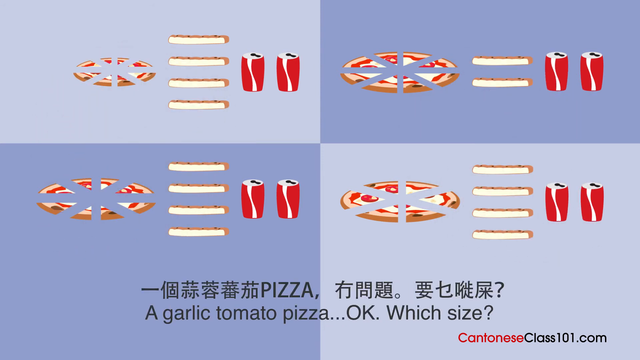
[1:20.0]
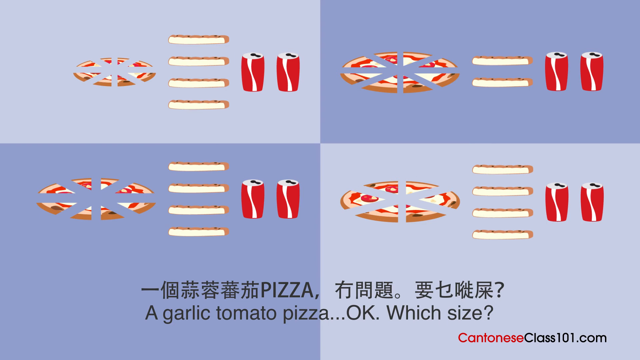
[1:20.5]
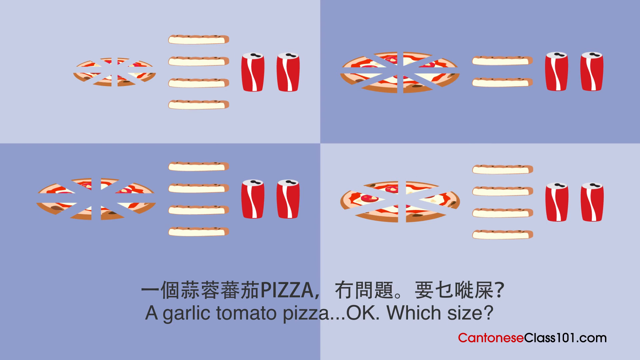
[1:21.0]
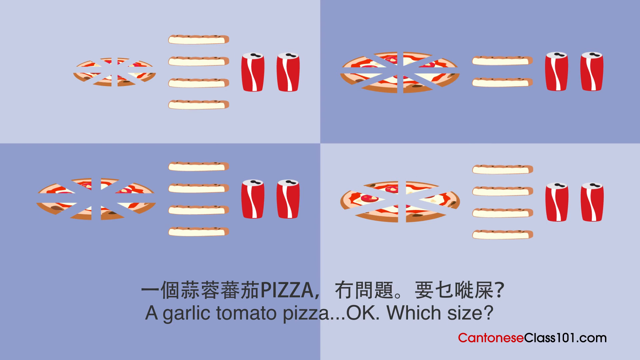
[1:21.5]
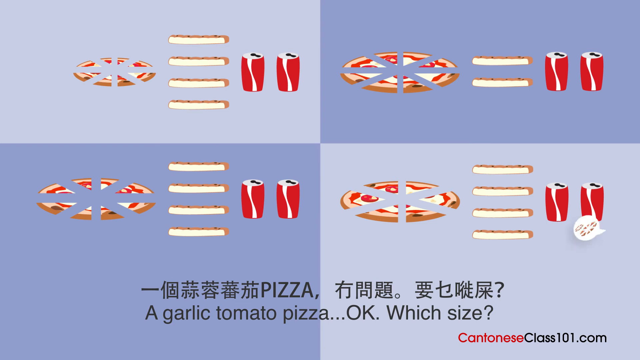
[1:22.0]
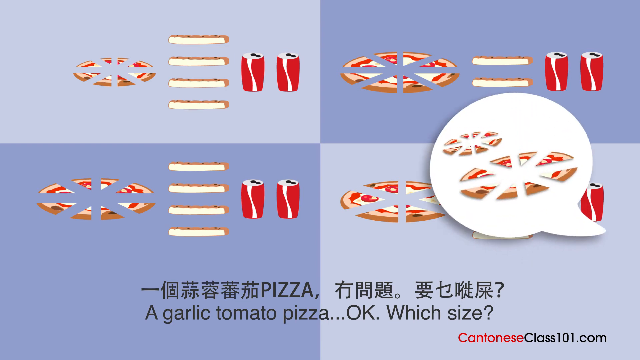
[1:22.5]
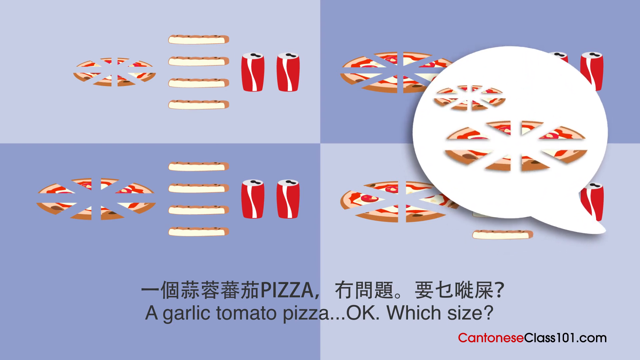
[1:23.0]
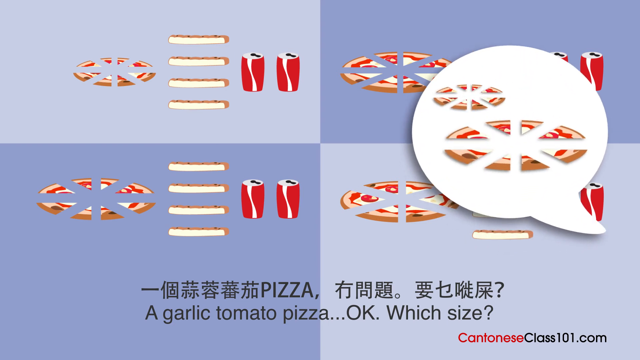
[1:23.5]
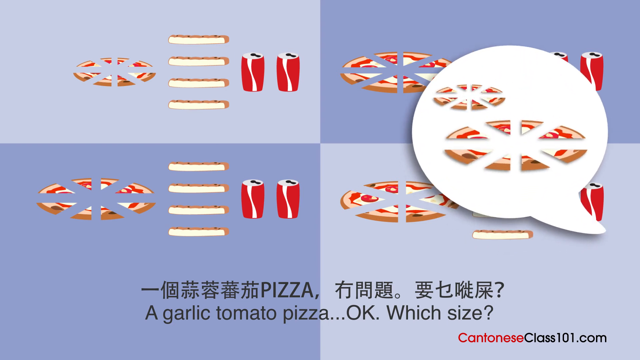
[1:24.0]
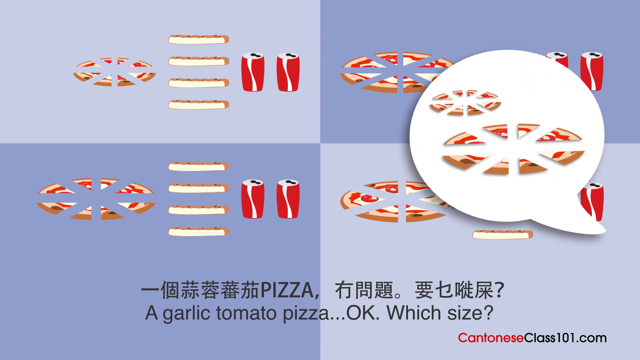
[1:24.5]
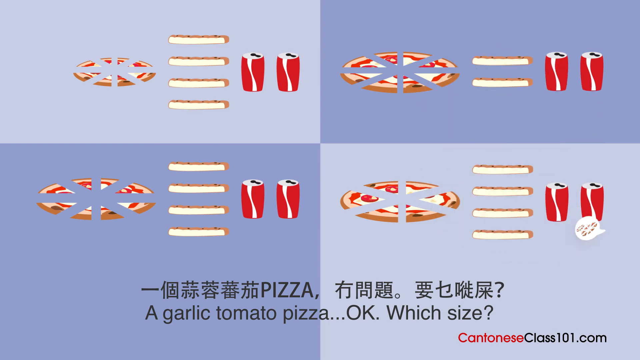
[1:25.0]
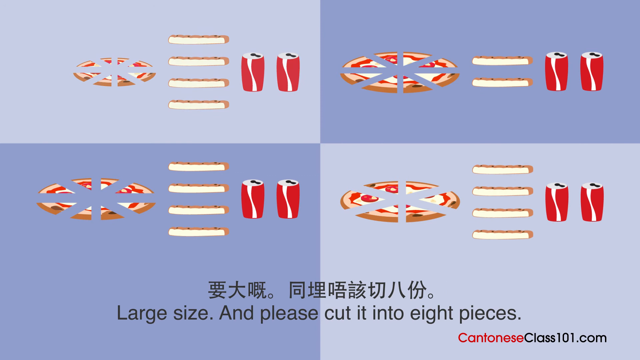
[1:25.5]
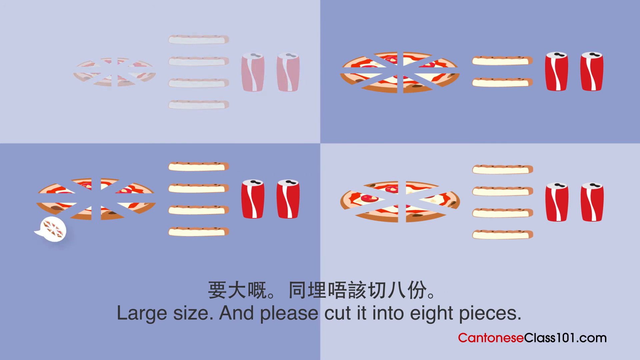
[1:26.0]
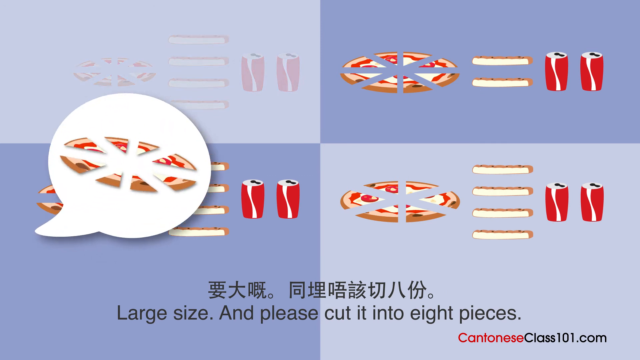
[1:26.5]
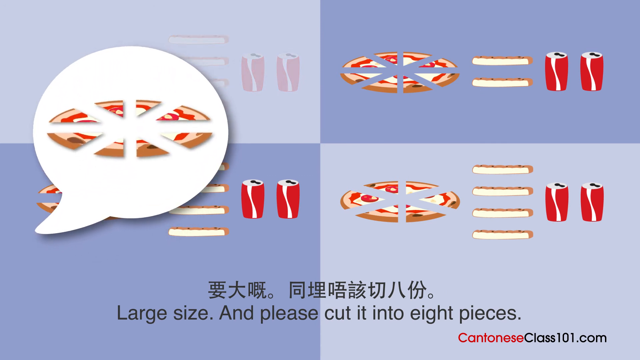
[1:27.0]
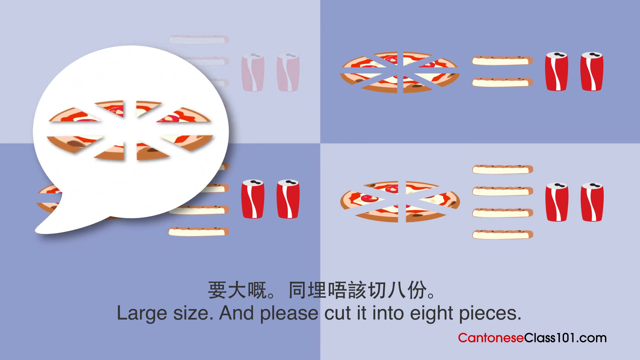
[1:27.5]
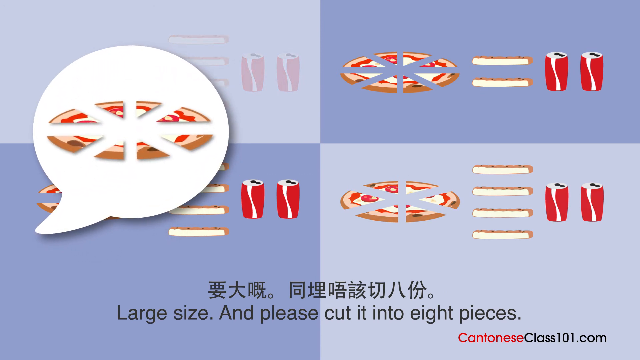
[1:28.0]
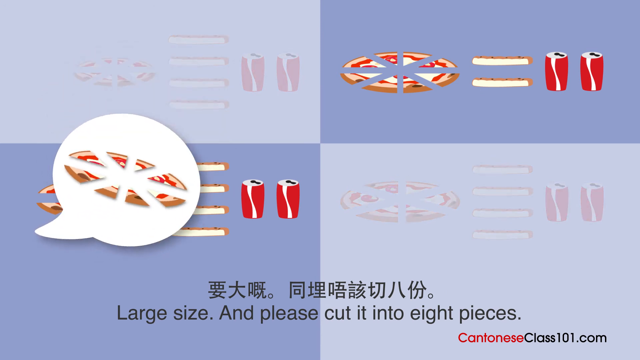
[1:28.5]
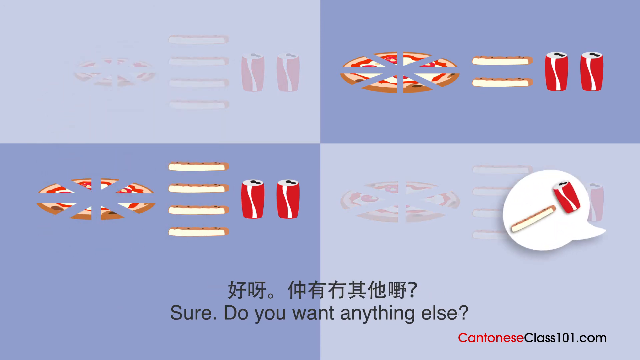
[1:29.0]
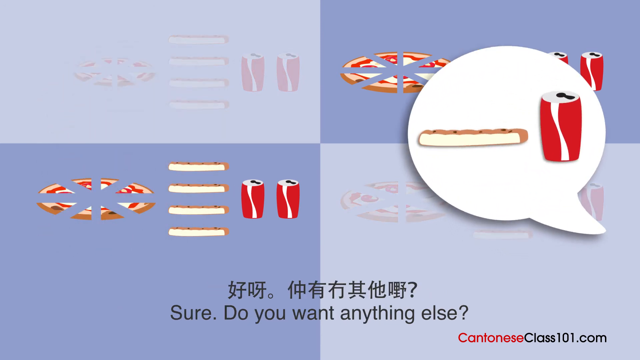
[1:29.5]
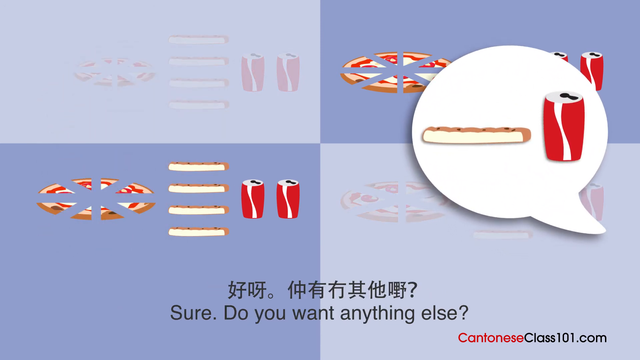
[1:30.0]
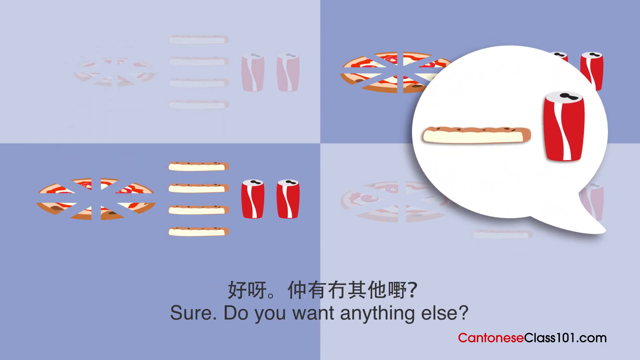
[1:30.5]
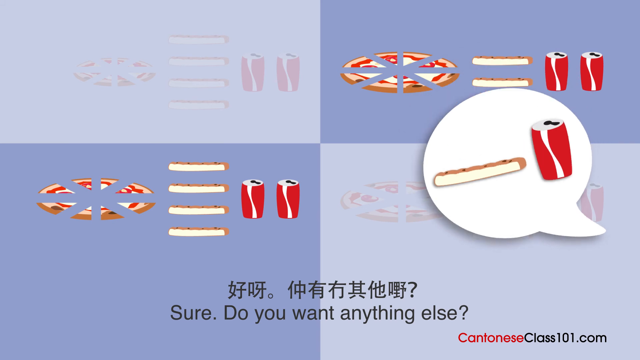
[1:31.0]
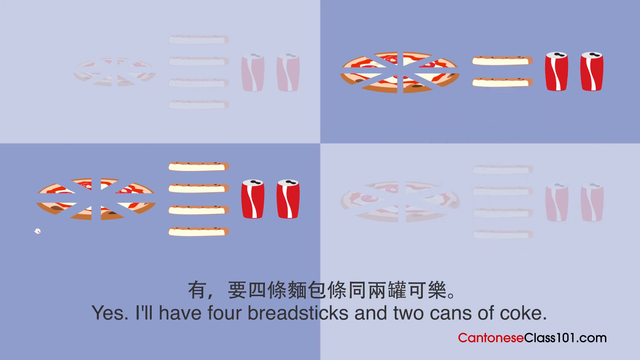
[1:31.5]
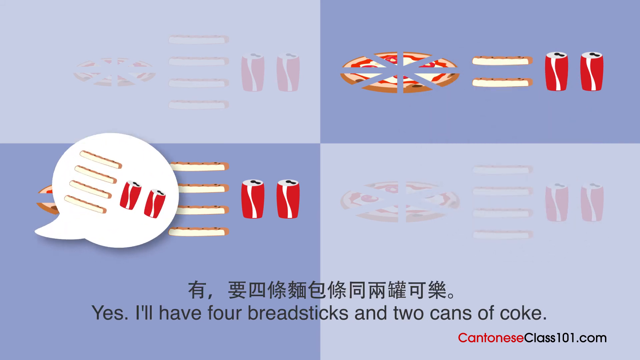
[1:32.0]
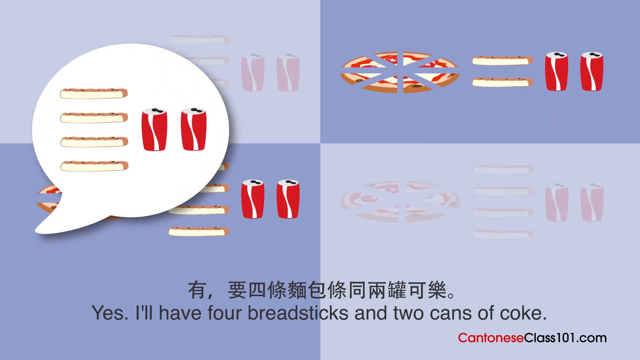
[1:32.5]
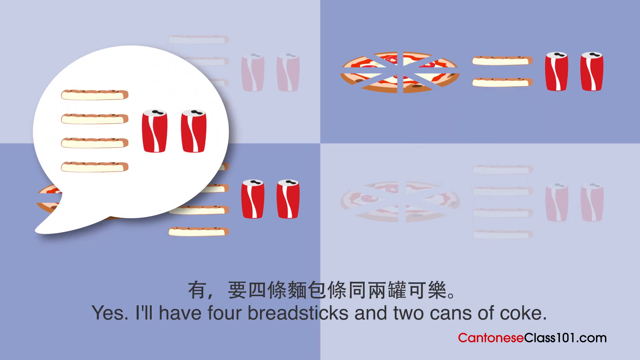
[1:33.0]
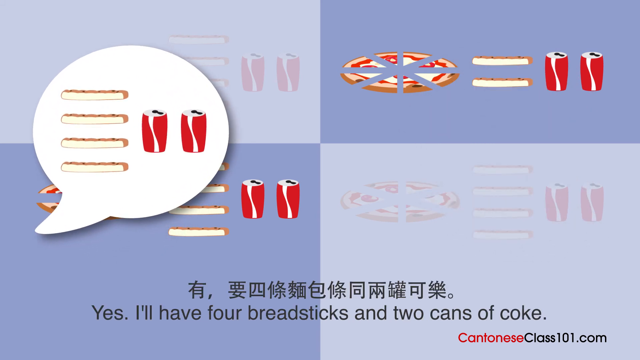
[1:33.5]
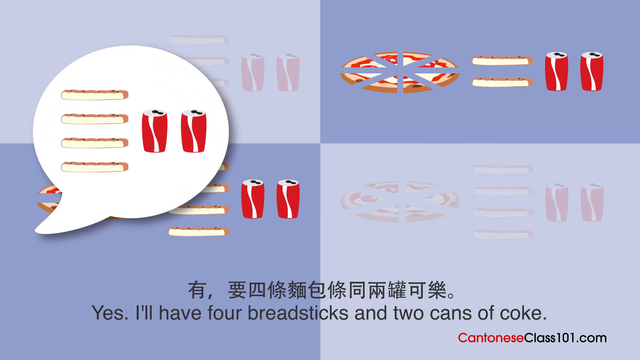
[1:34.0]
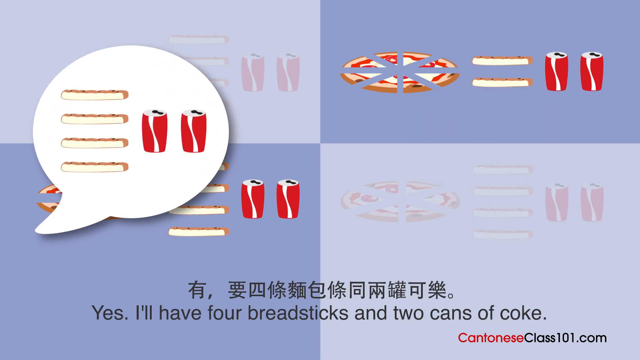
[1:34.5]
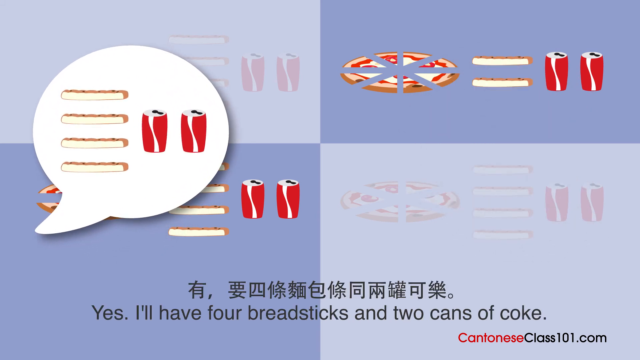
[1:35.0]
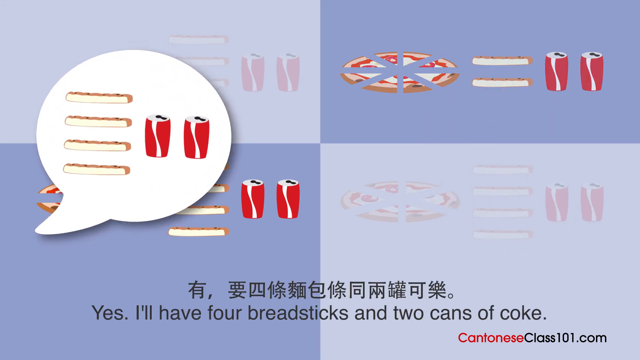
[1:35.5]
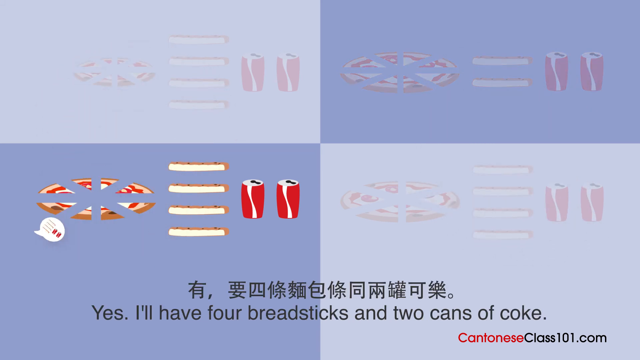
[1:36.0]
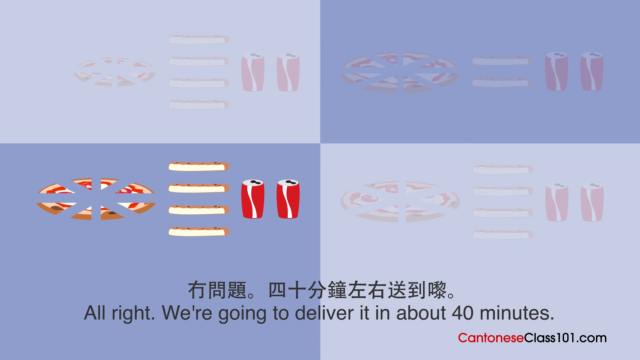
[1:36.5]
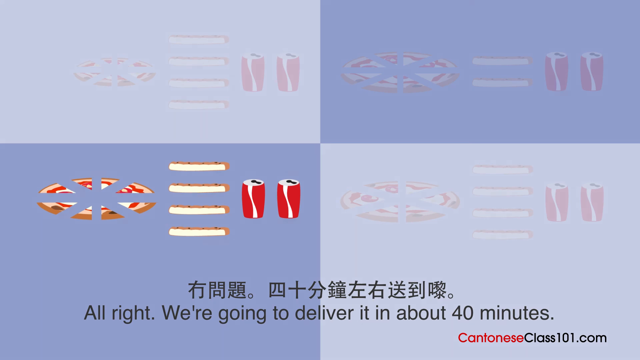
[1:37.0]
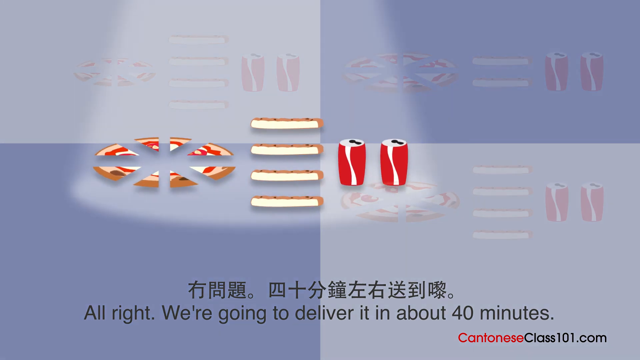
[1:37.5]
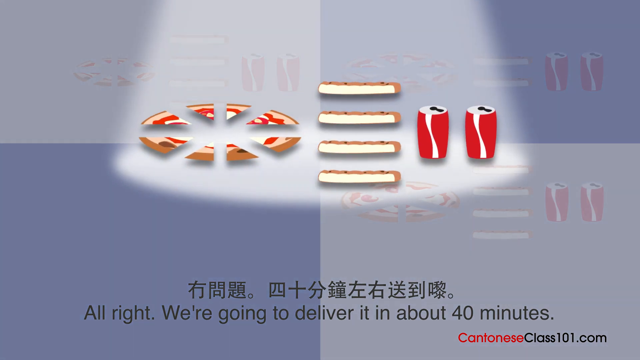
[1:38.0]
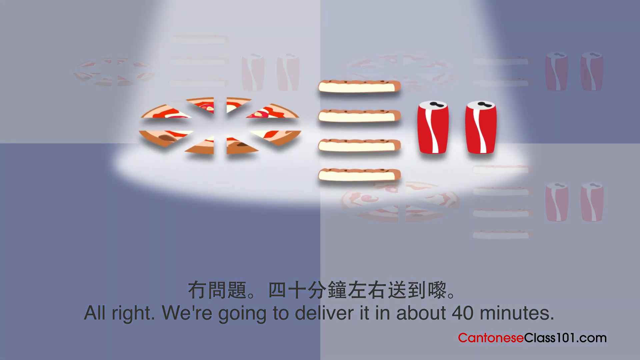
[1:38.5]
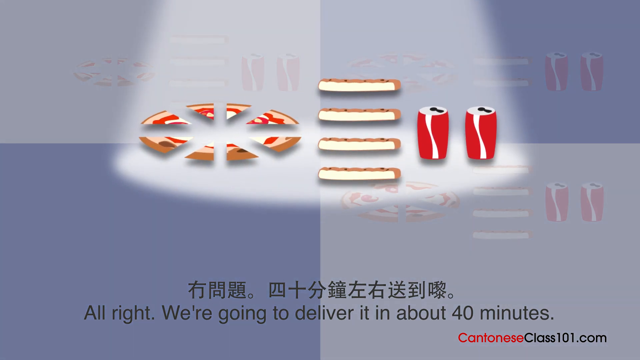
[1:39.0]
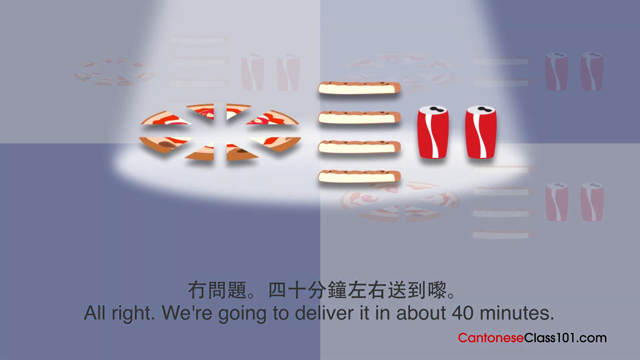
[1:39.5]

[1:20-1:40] The four pictures remain on the screen, with instructions written at the bottom: "garlic tomato pizza okay which size a large size and please cut it into eight pieces sure do you want anything else yes I'll have four breadsticks with two cans of coke all right we're going to deliver in about 40 minutes." The icon matching the customer's order is then chosen. The items in the middle of the pictures are not pizza but breadsticks; the four pictures show different orders. The third picture, with the pizza cut into eight slices, four breadsticks and two cans of coke, is chosen because it matches the order exactly.